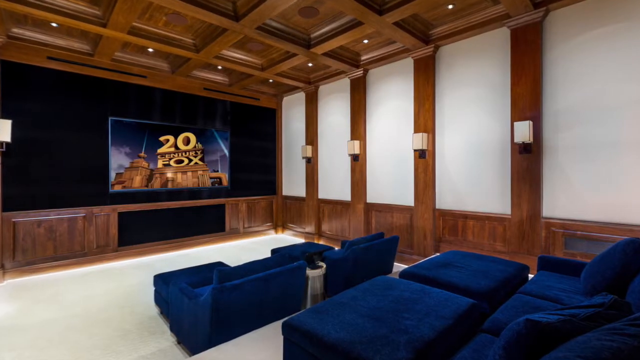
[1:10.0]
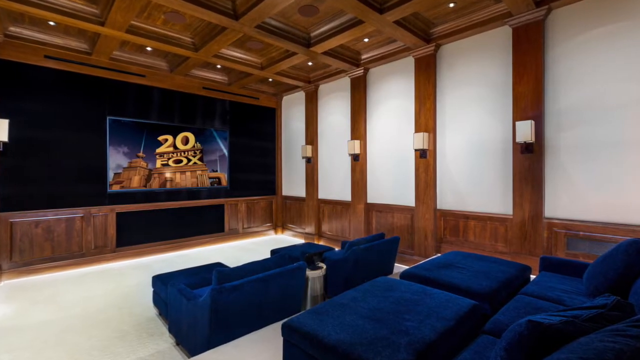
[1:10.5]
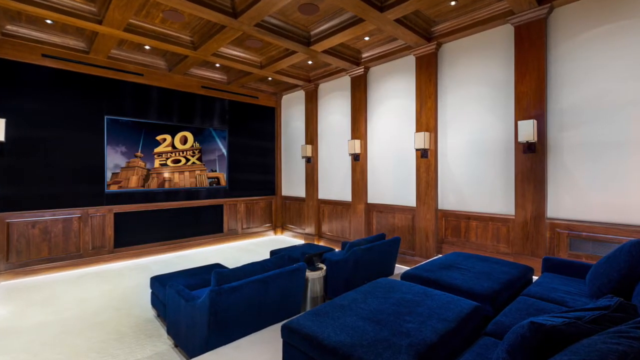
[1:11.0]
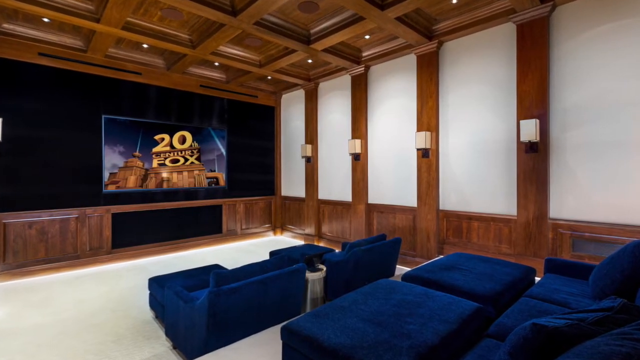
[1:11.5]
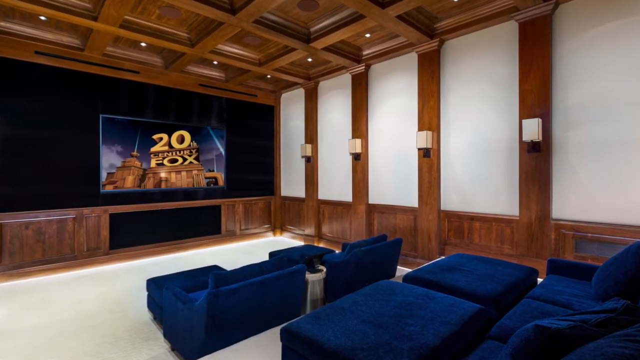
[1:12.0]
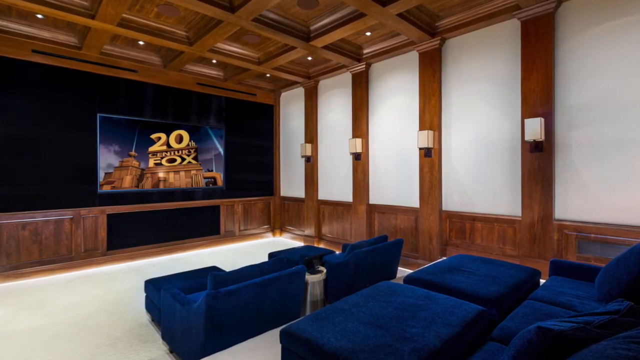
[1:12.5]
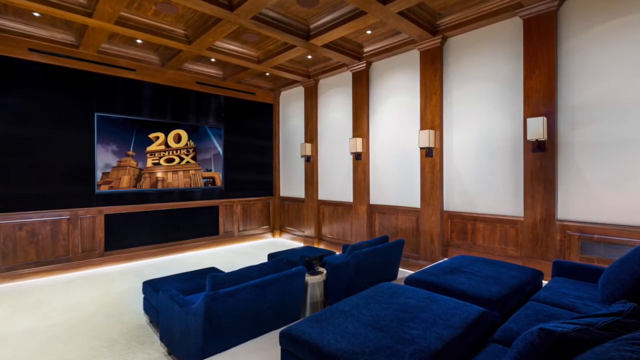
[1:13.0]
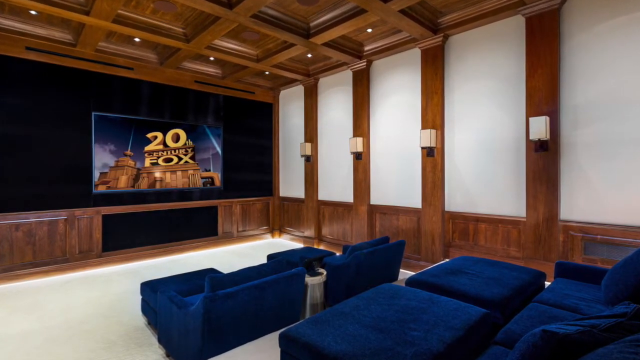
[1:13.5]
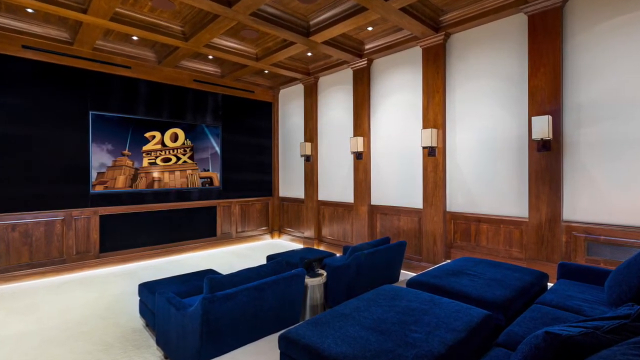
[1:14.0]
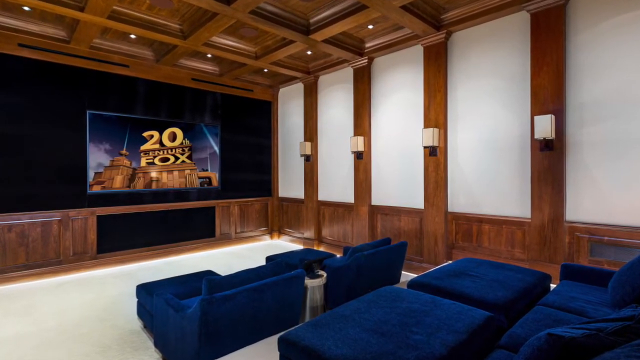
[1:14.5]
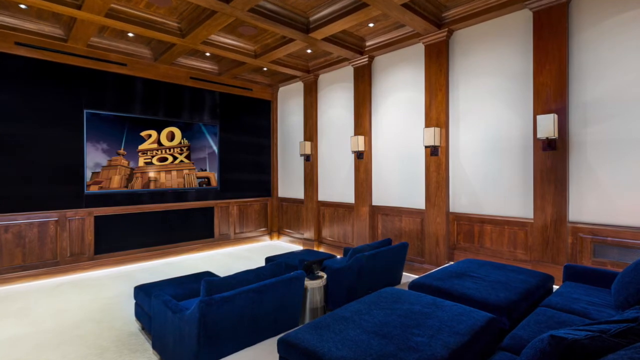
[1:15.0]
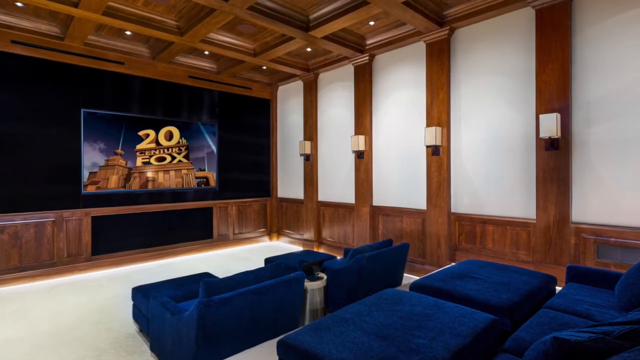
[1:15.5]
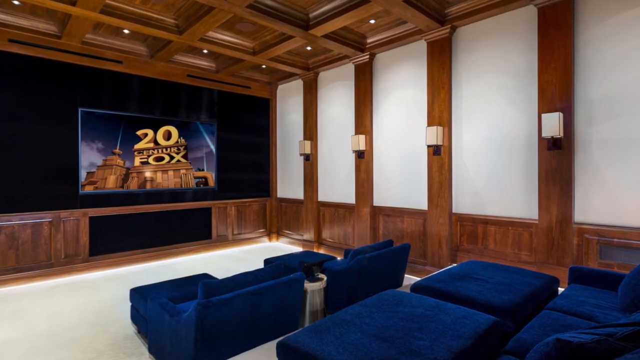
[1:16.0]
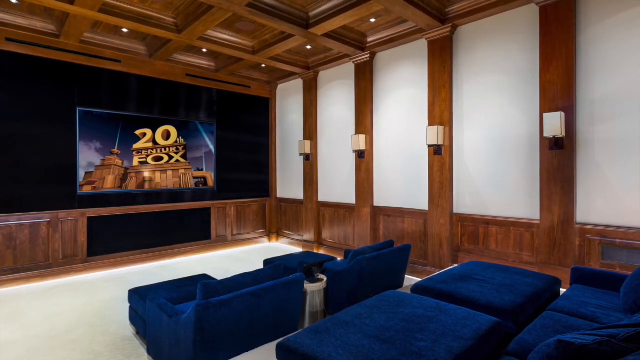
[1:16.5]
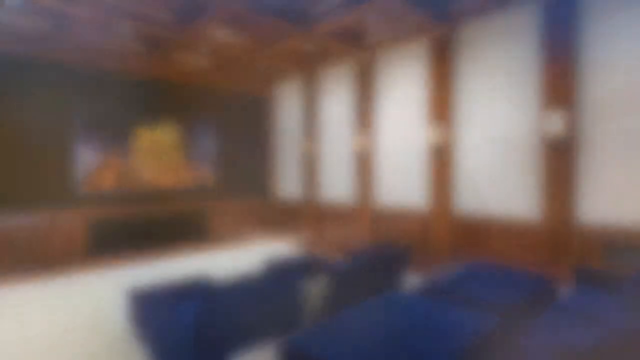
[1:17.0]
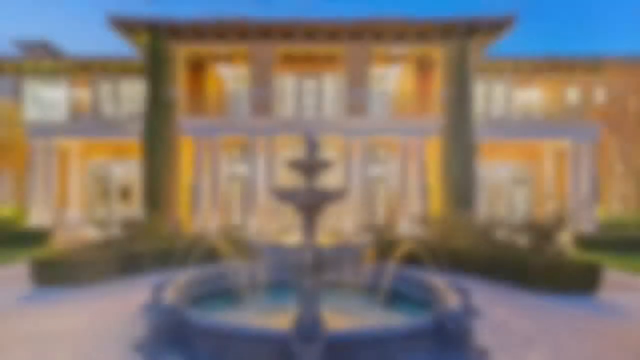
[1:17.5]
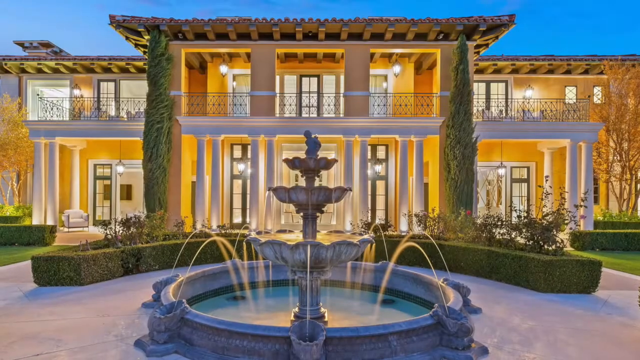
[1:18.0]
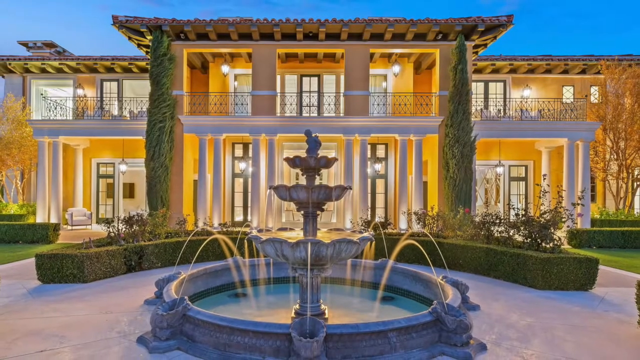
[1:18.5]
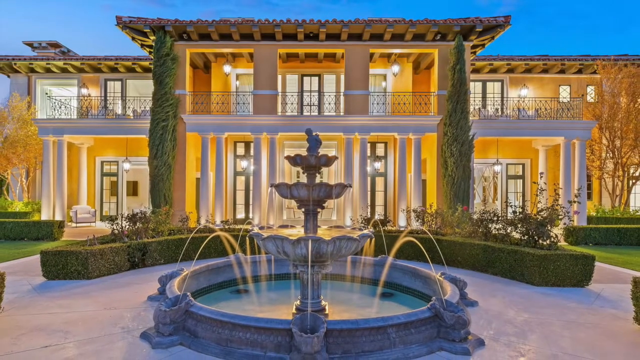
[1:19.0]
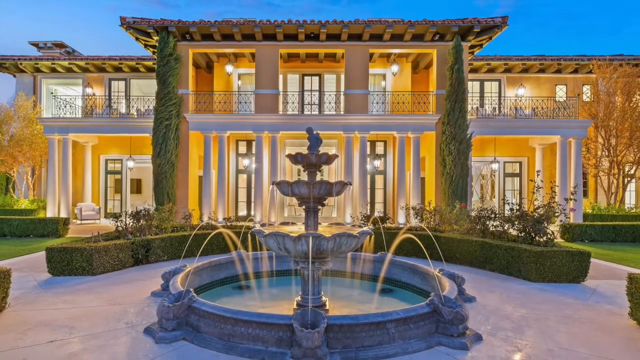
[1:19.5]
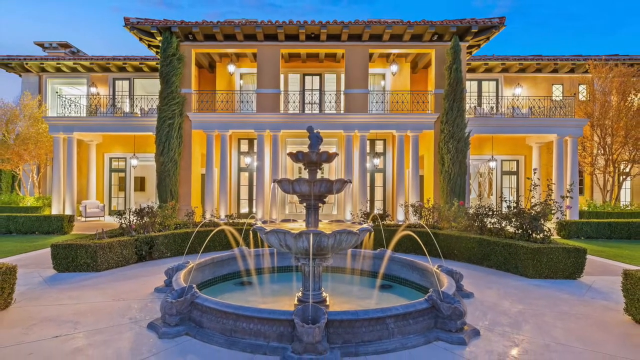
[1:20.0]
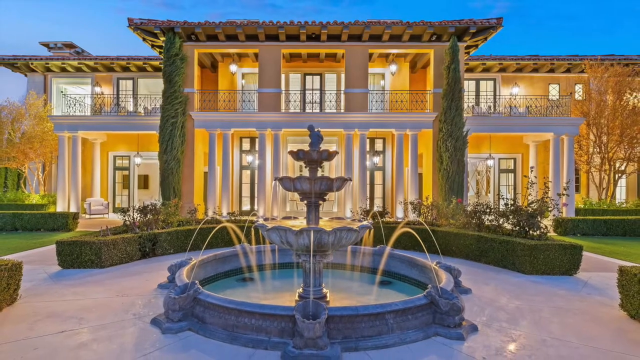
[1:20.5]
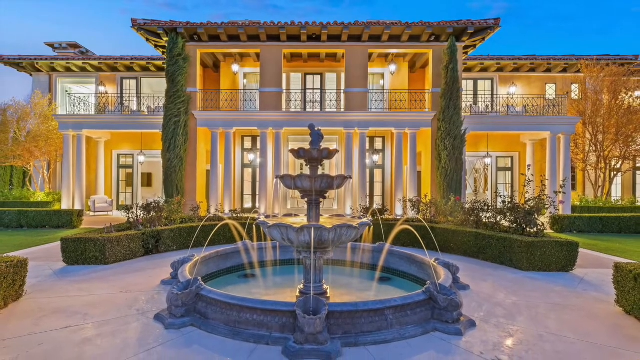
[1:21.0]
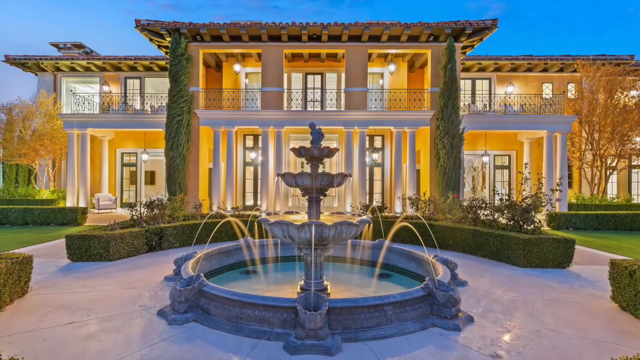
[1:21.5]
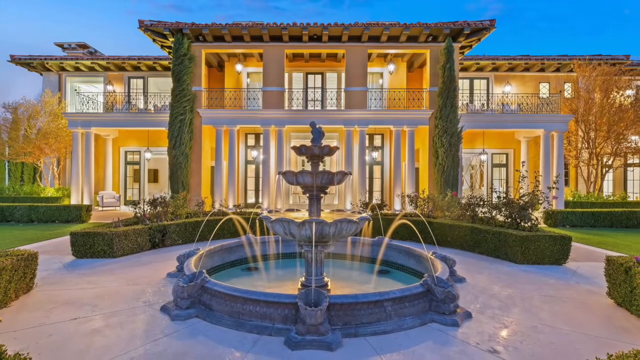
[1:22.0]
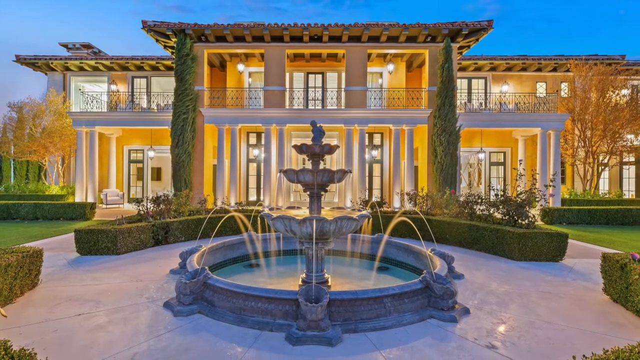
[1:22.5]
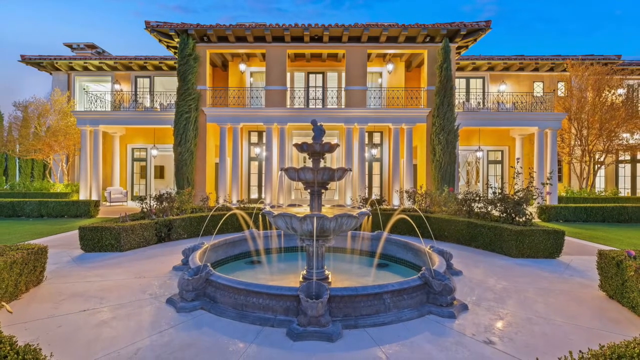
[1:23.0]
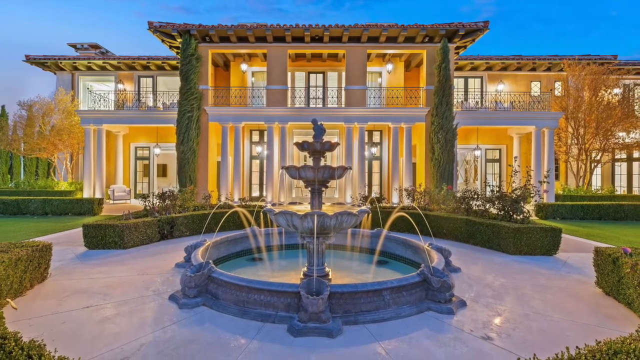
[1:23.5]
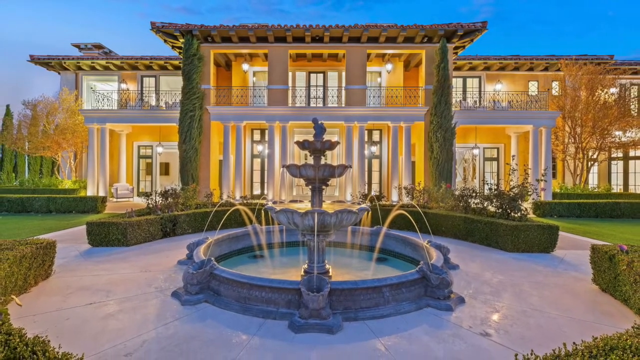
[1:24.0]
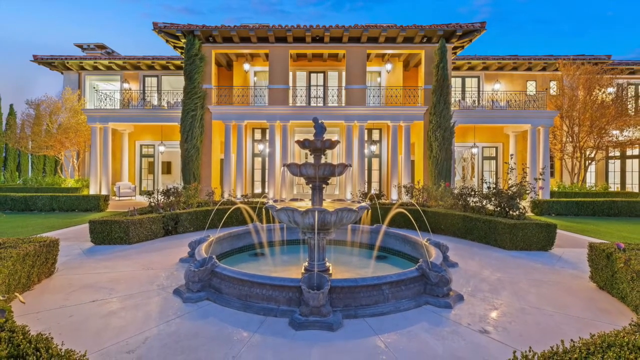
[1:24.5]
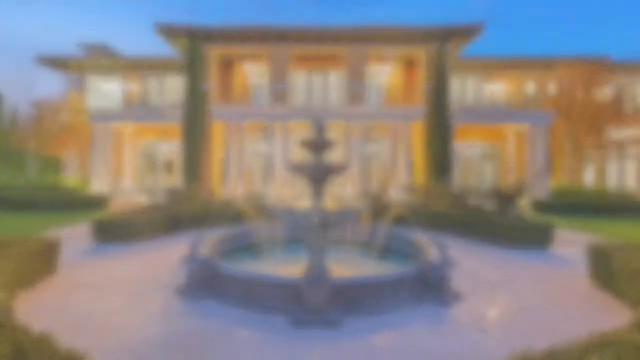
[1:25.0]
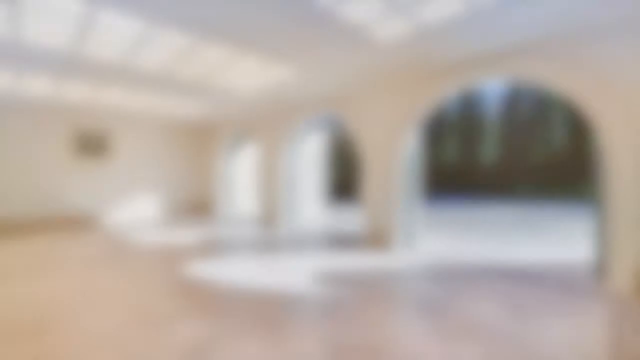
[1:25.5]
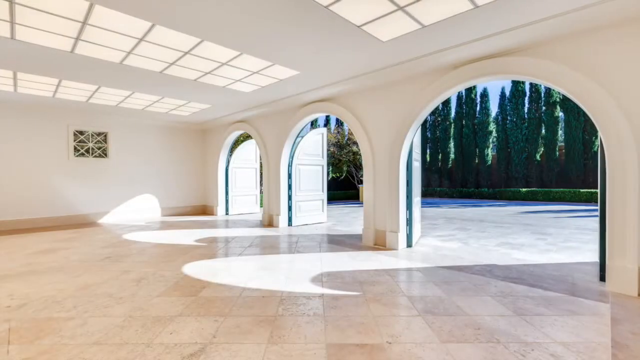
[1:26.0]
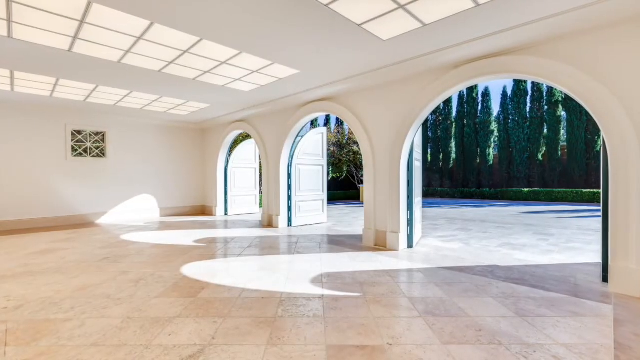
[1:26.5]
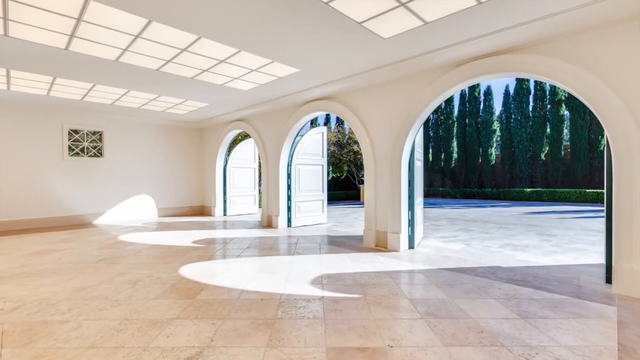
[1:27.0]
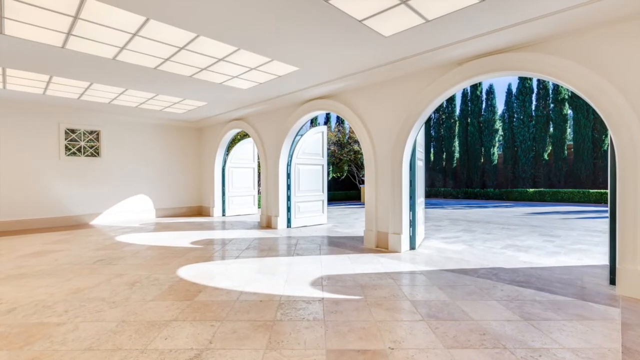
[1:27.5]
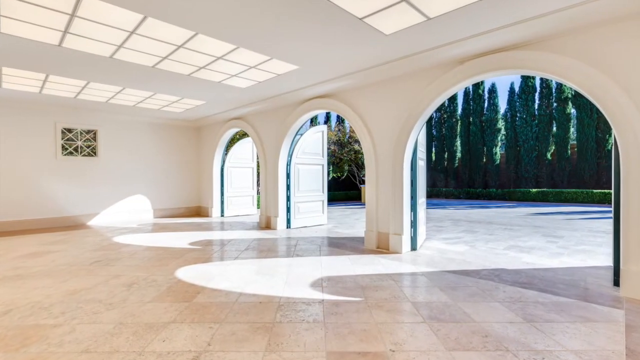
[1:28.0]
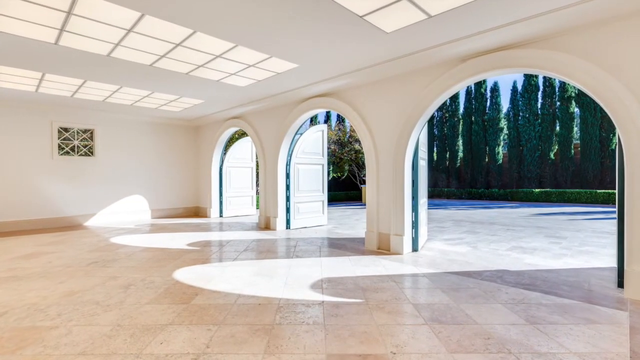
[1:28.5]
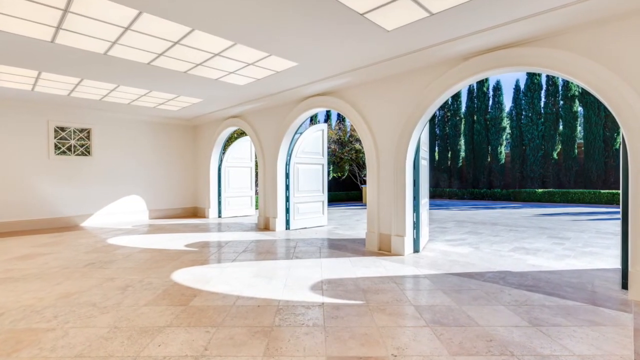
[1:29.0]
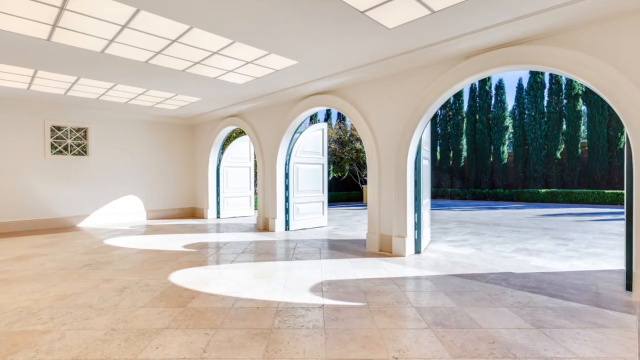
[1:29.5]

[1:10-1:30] The multimedia viewing room has blue cushioned seats, a wood-paneled ceiling, and light-colored walls with vertical wood beams, each beam with an accent lamp with a white square shade. On the screen in the distance is the 20th Century Fox logo. Next comes an evening view of the outdoor fountain area of the mansion, with the fountain water highlighted by colored lights. The fountain has three levels plus the pool at the base, surrounded by angled, curved, manicured hedges. In this night view, a large terrace on top of the porch overlooks the entryway. The camera pans outward, showing circular sidewalks. Then an open three-car garage appears with no cars present, just an open floor of large polished tile set at angles. Each garage doorway has a unique curved upper design. The ceiling has lights recessed behind panels, and outside there is a vast paved parking area with tall manicured shrubbery in the distance.